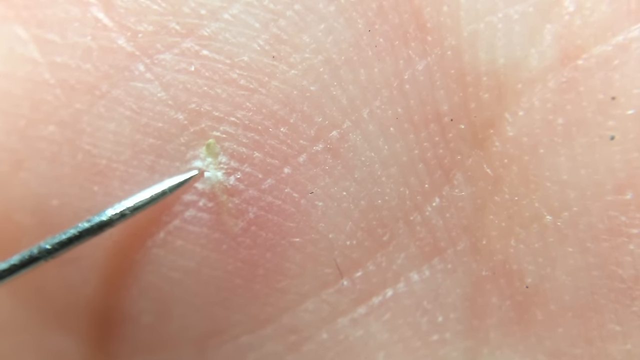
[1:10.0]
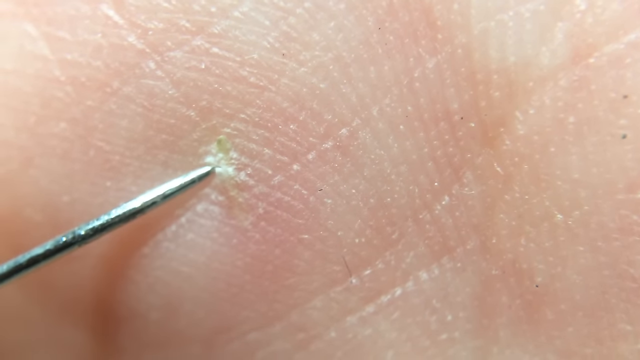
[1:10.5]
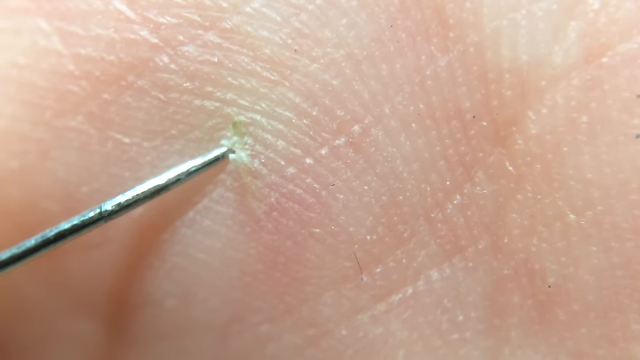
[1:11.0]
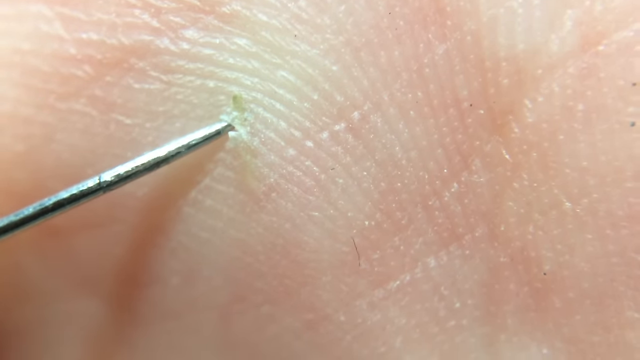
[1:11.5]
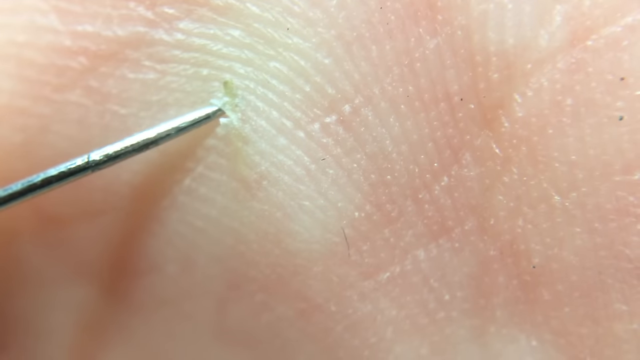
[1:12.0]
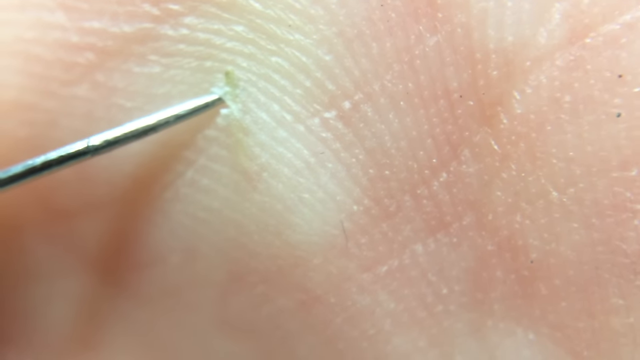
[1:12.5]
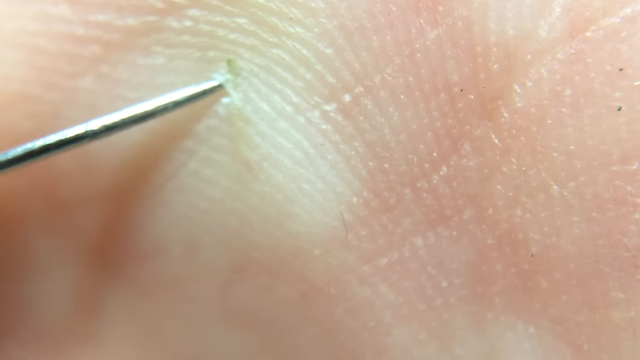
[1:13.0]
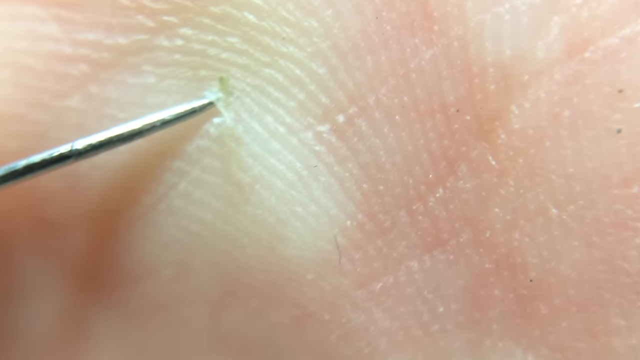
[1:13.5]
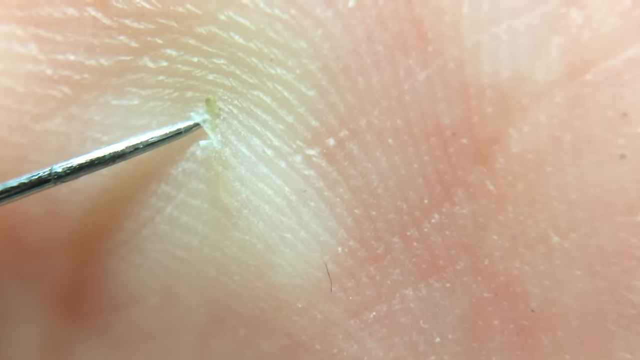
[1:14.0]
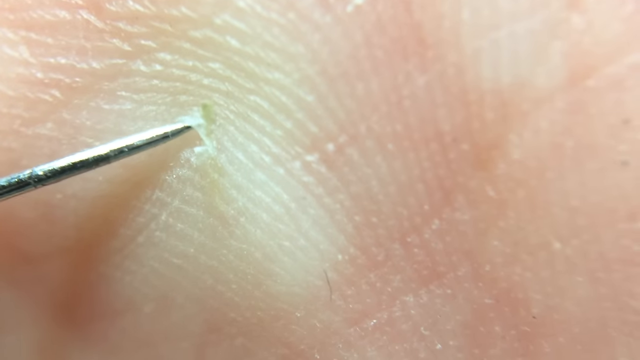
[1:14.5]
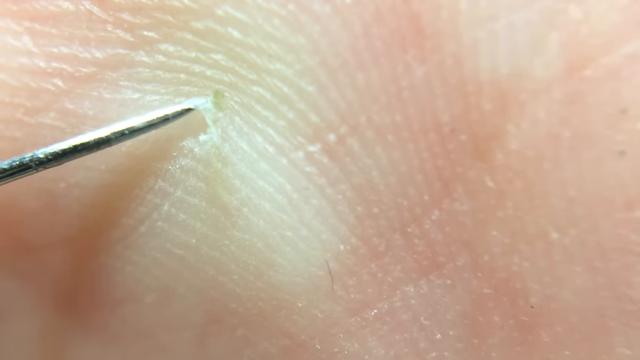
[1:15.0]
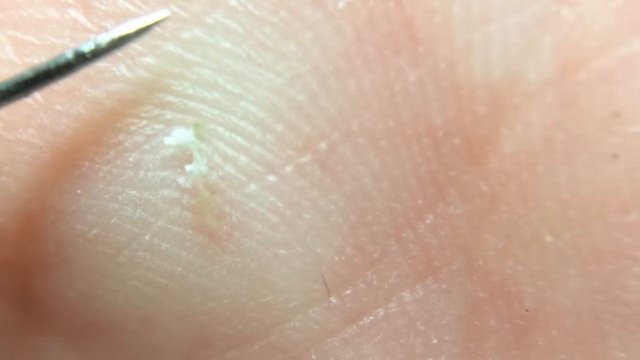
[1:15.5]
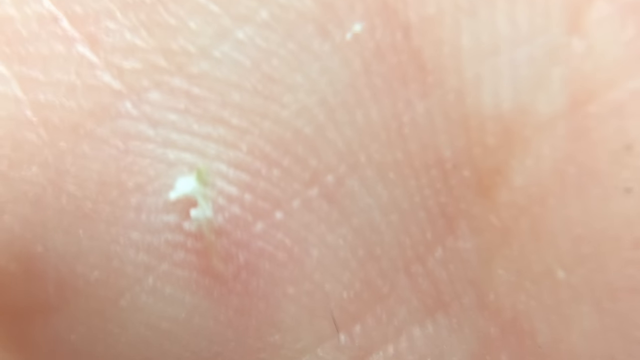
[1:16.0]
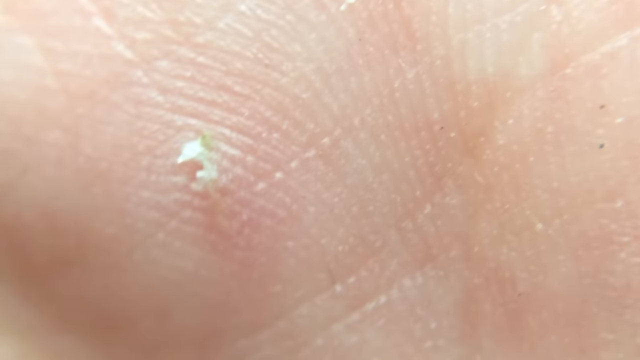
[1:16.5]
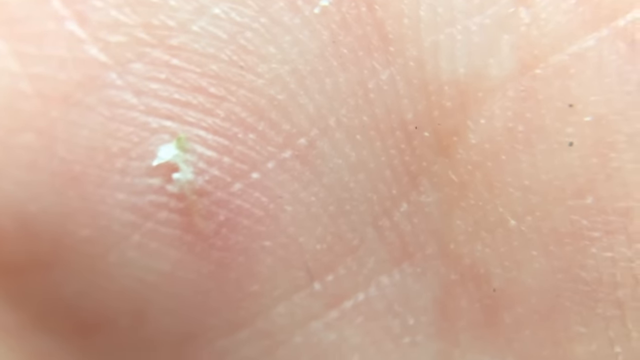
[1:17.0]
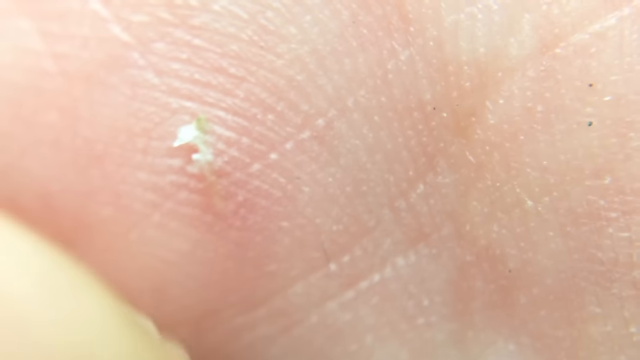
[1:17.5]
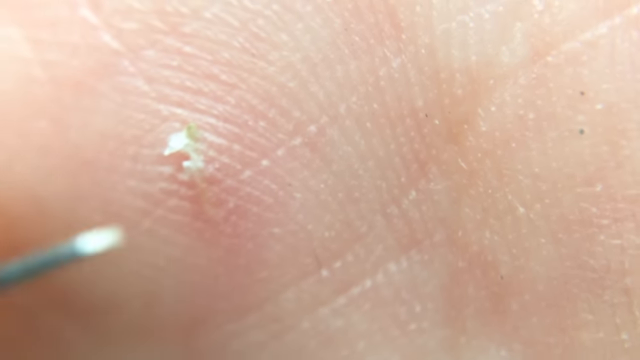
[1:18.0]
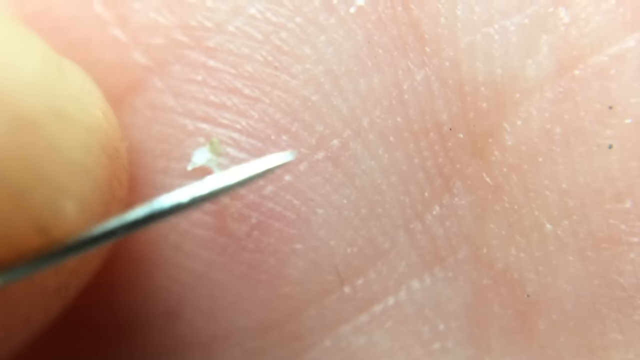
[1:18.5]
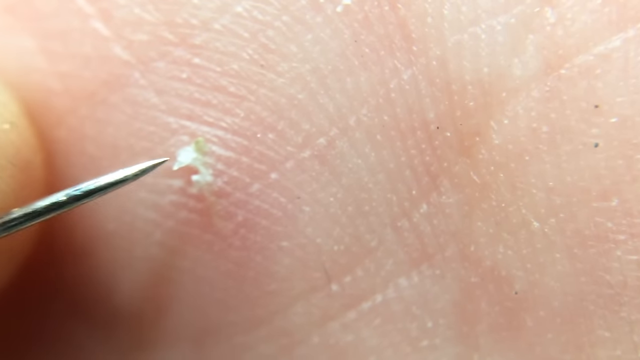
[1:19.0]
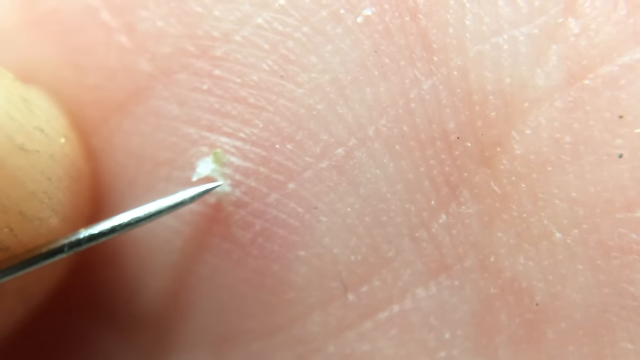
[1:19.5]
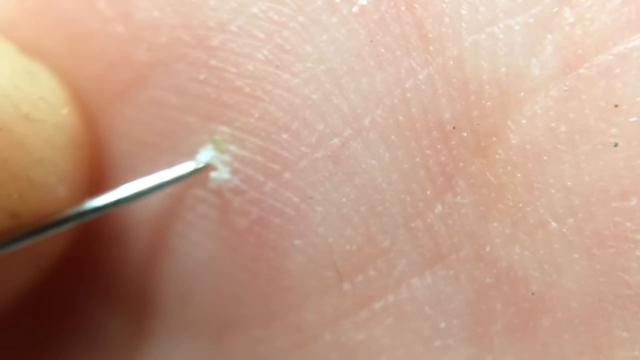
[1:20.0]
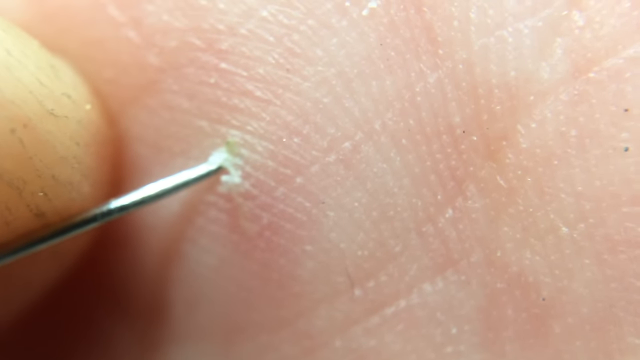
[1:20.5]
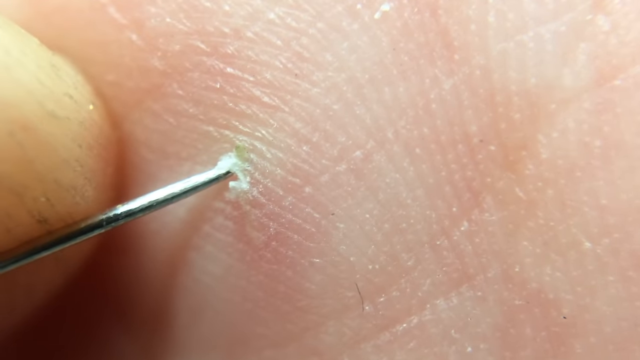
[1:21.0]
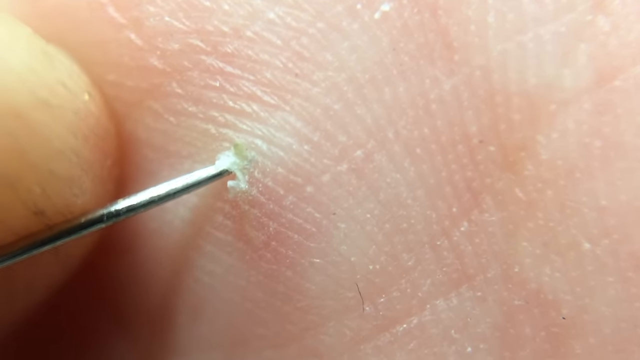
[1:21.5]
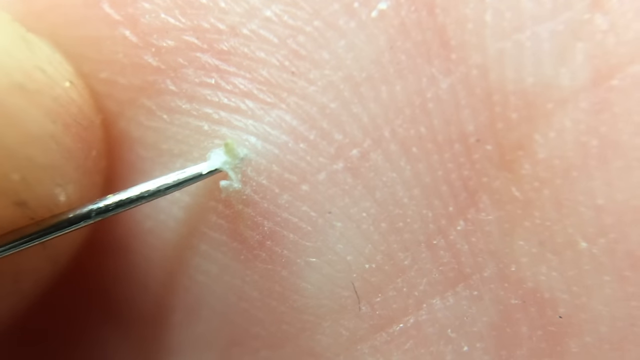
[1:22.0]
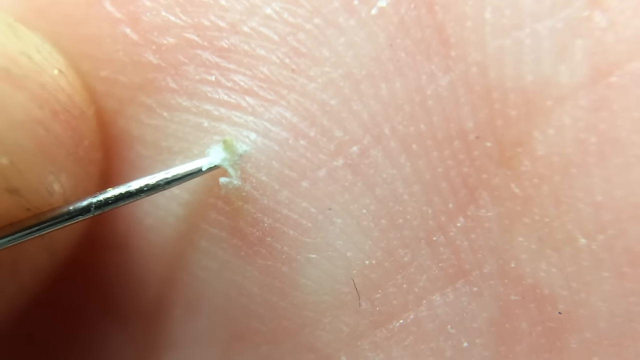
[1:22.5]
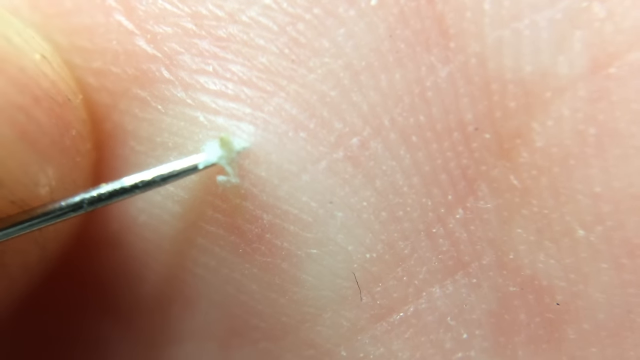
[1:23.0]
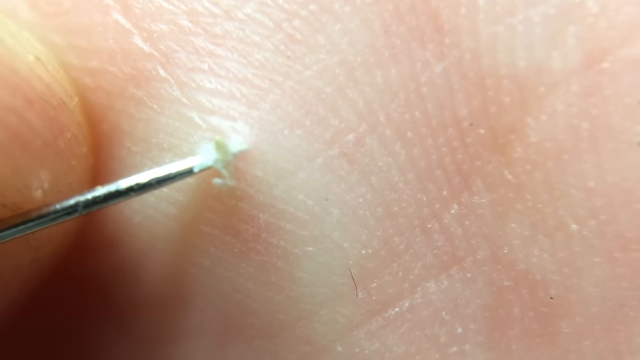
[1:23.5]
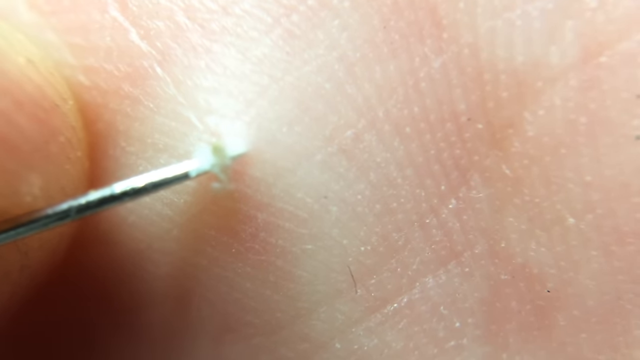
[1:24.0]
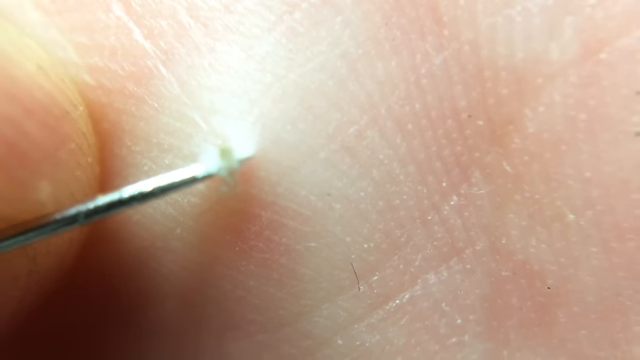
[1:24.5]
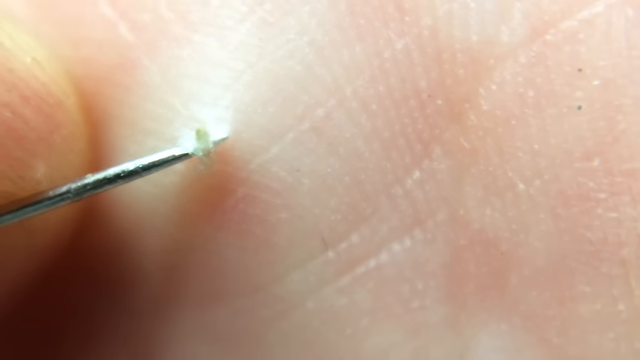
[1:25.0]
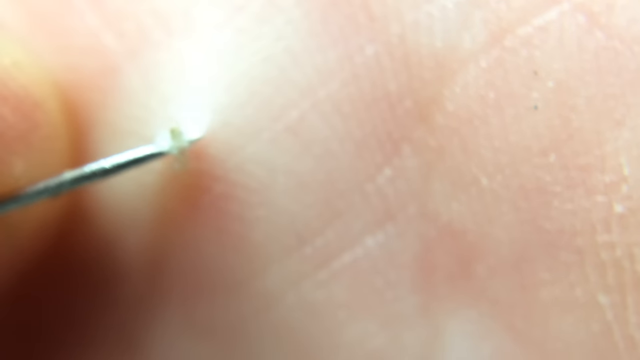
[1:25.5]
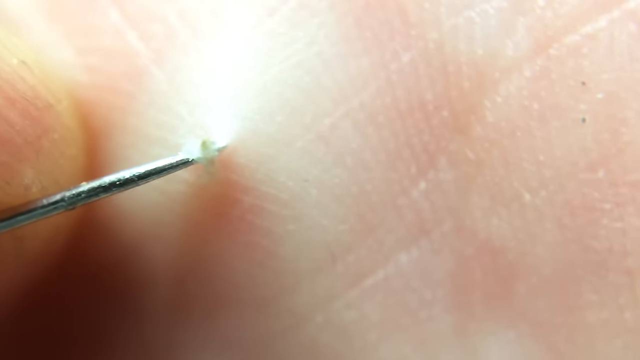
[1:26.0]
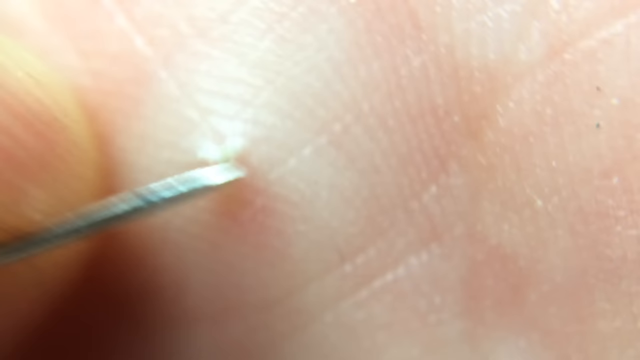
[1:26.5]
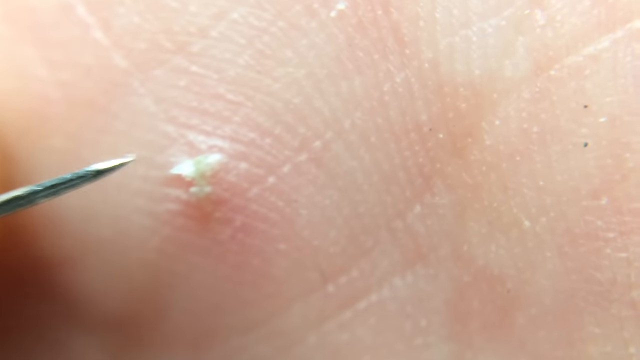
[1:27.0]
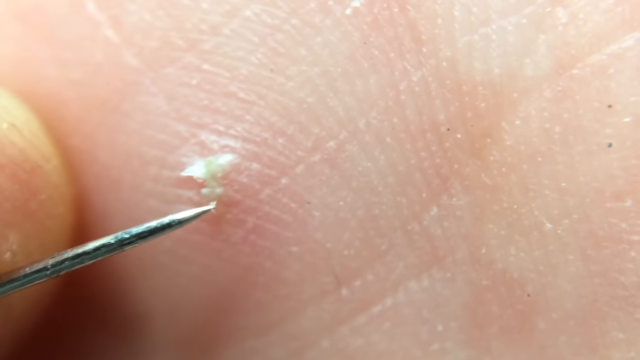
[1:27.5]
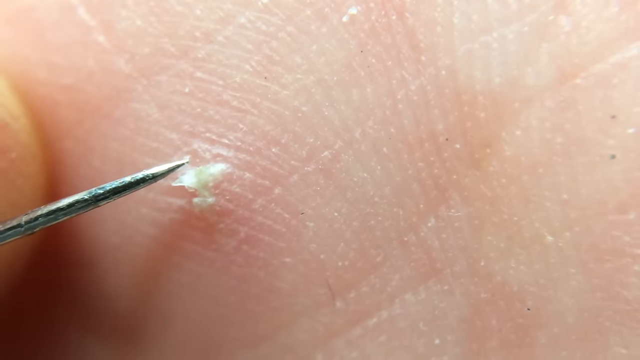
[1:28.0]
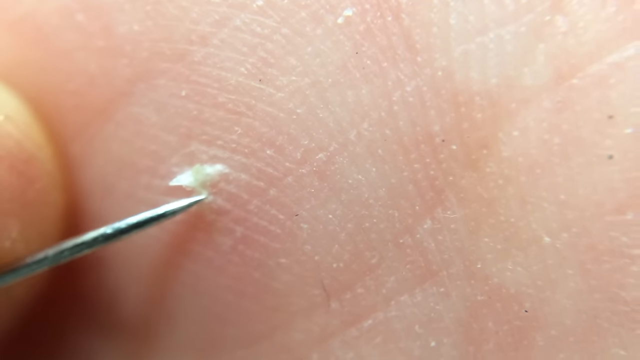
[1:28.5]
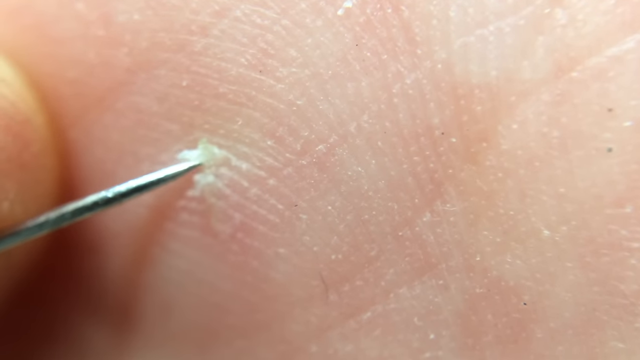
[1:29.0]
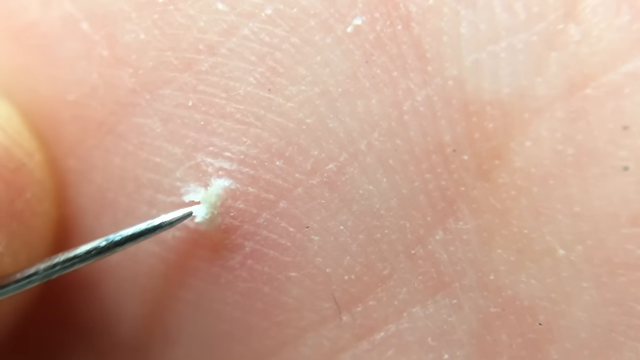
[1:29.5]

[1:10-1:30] A close-up shows the palm of someone's hand with a small splinter in the middle of the palm. A silver metal needle comes into frame and goes into the skin underneath the splinter, then pulls up, trying to work the splinter out from under the skin. At one point he goes deep under the skin, and when he pulls up, the skin rips and turns from light pink to white. He goes back into that same hole, putting the needle underneath the splinter and pulling up and out again, trying to free the tip of the splinter. He keeps doing the same thing, going into the same hole and pulling up, trying to work the tip of the splinter out of the skin so he can grab it.